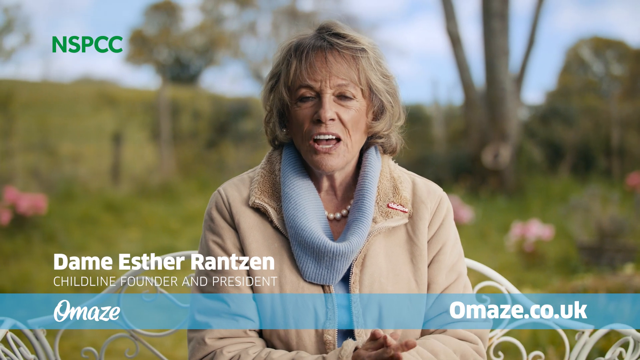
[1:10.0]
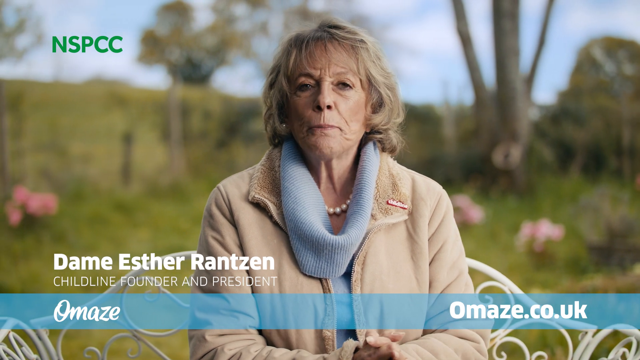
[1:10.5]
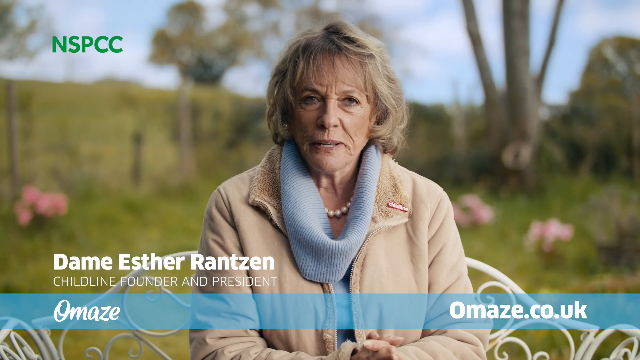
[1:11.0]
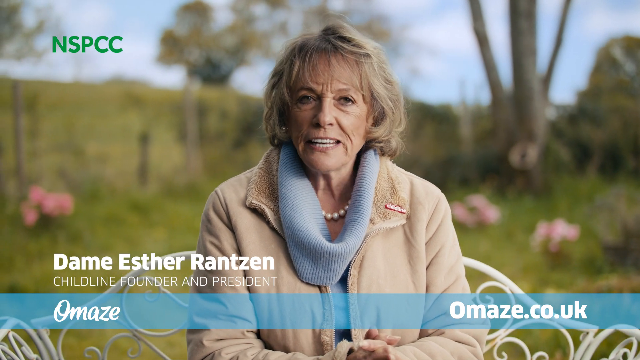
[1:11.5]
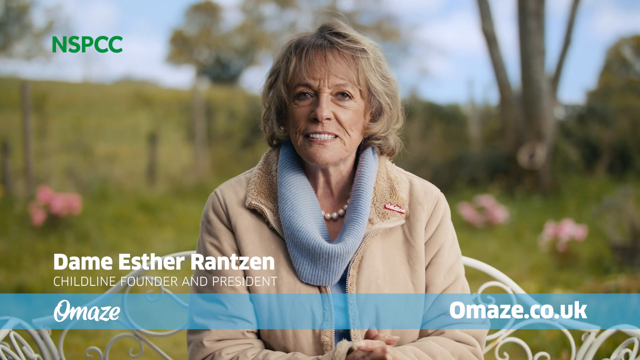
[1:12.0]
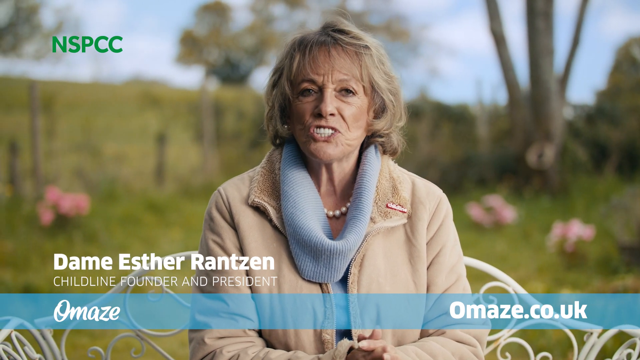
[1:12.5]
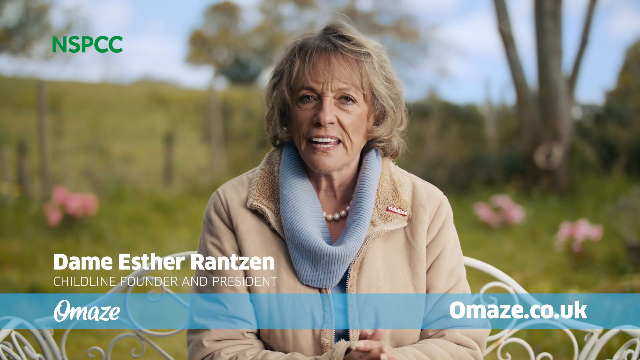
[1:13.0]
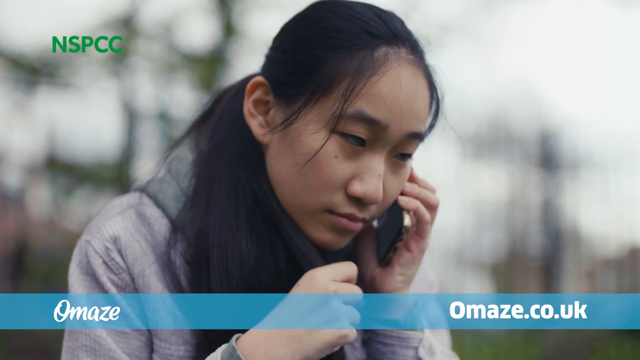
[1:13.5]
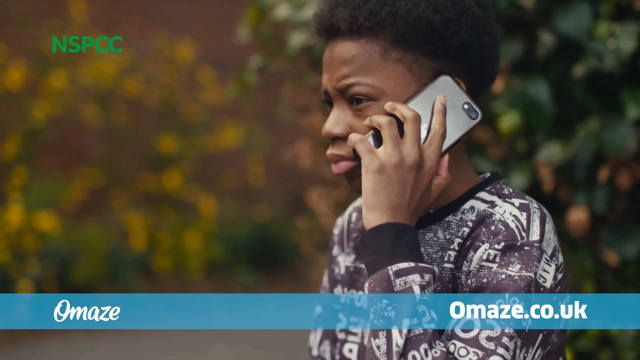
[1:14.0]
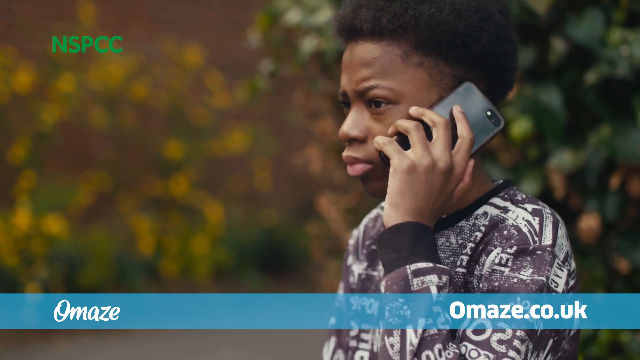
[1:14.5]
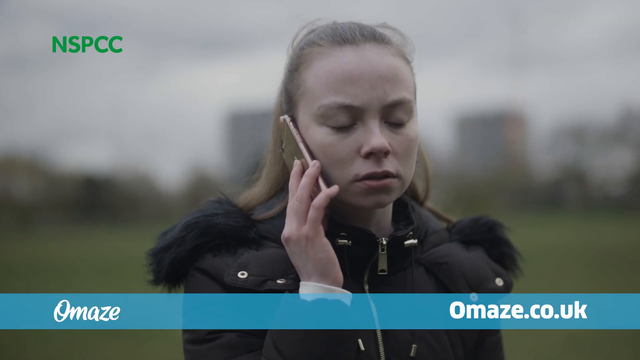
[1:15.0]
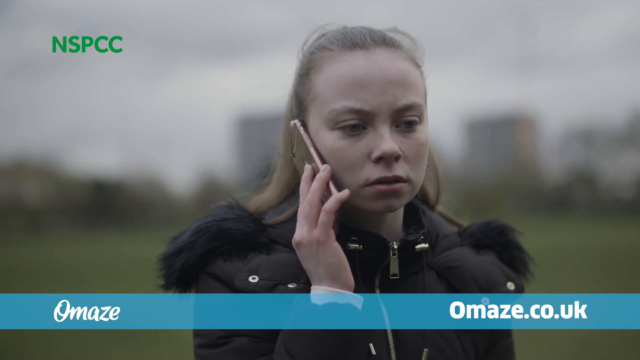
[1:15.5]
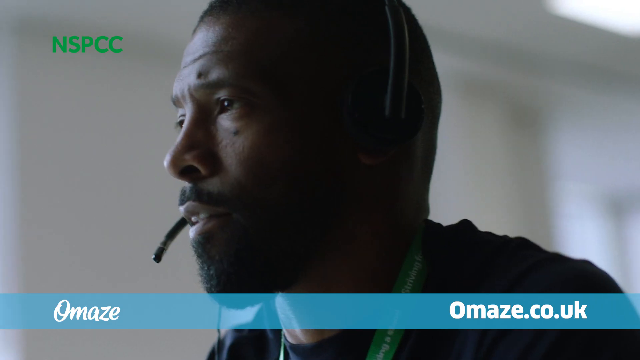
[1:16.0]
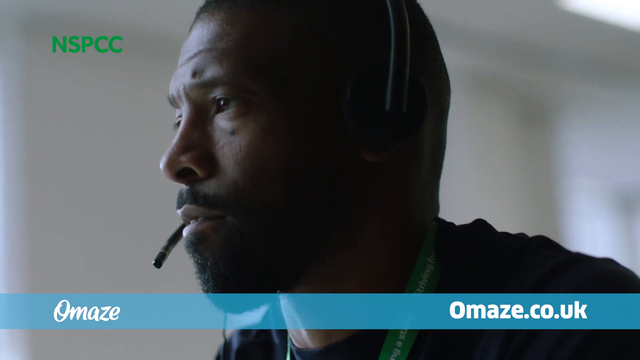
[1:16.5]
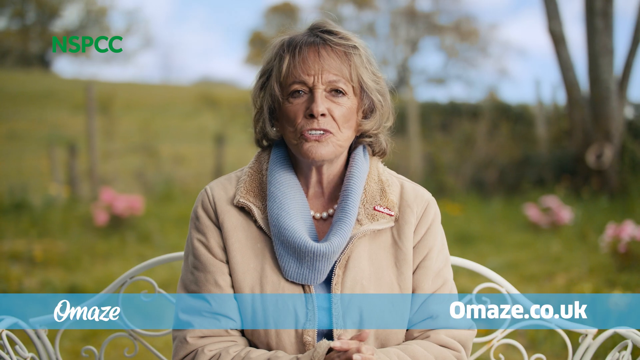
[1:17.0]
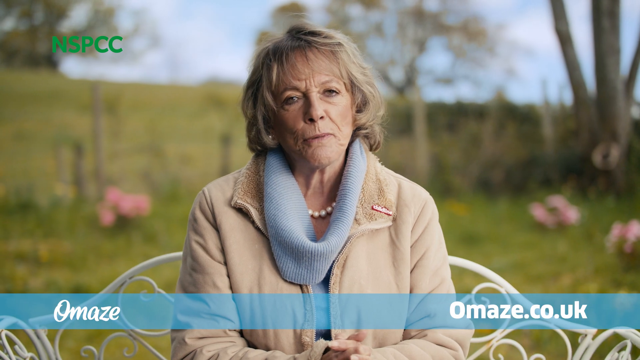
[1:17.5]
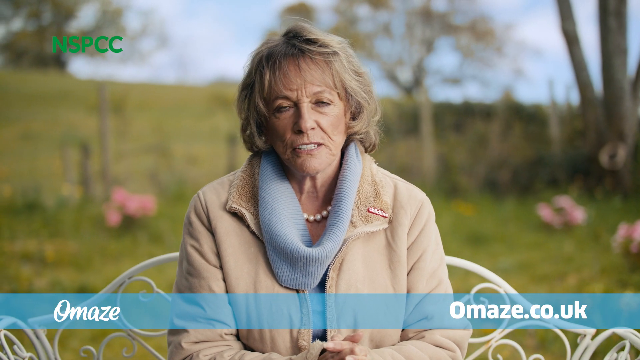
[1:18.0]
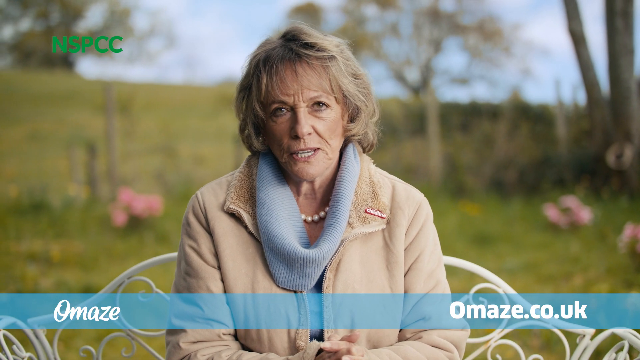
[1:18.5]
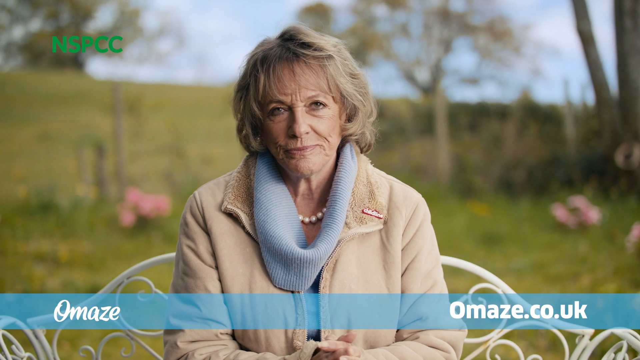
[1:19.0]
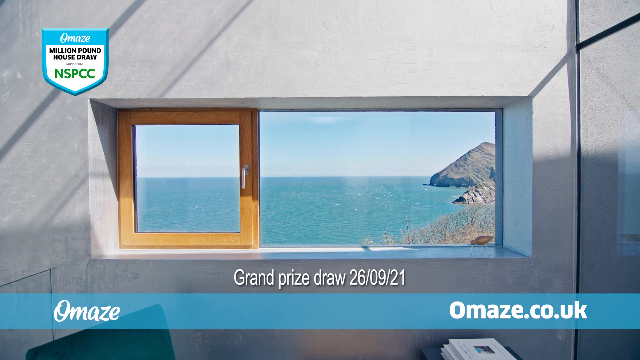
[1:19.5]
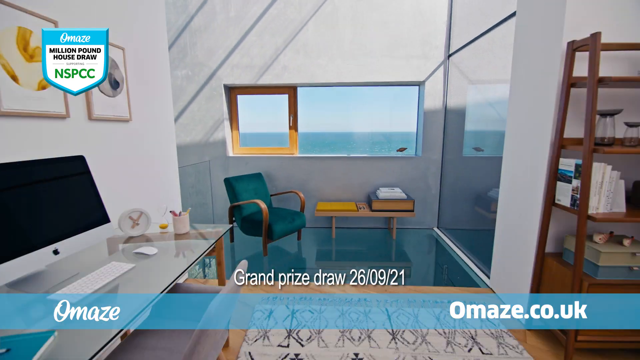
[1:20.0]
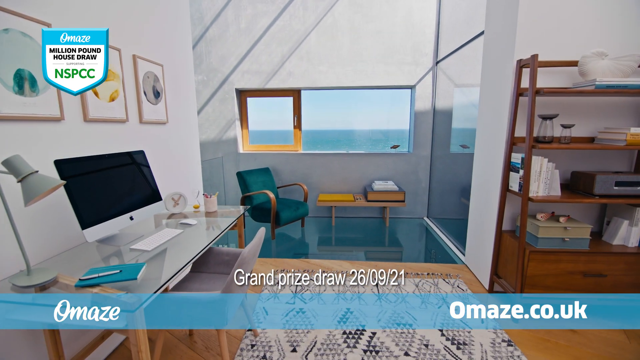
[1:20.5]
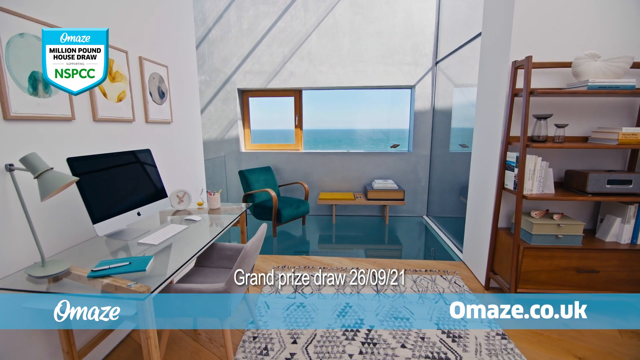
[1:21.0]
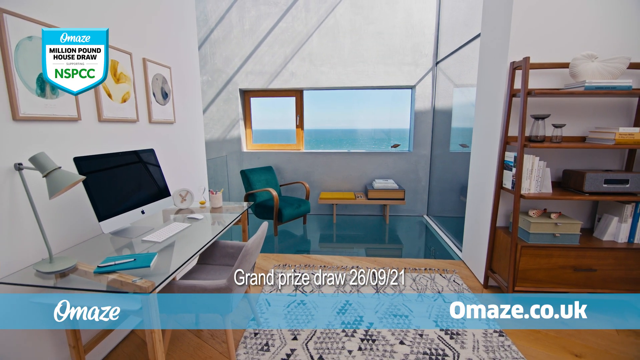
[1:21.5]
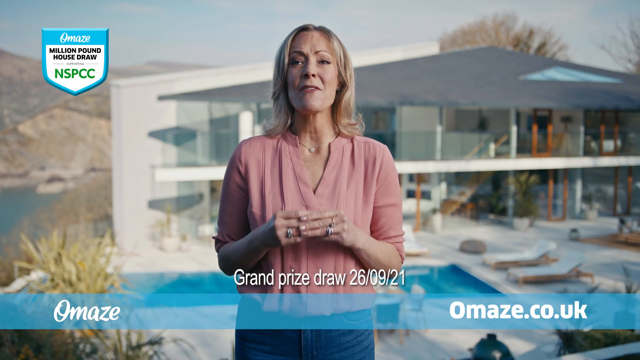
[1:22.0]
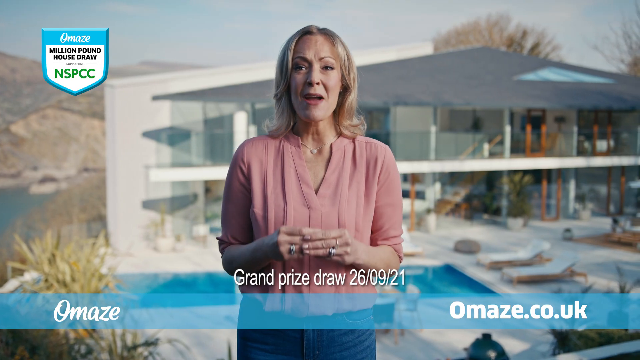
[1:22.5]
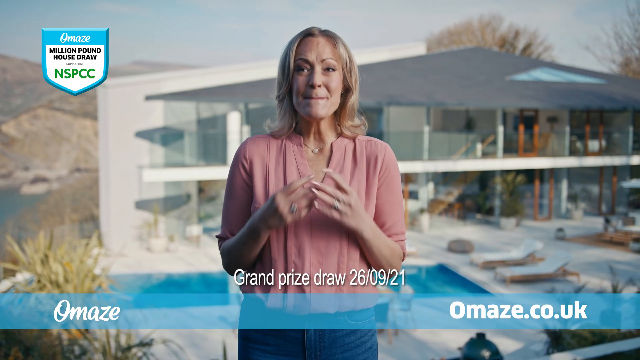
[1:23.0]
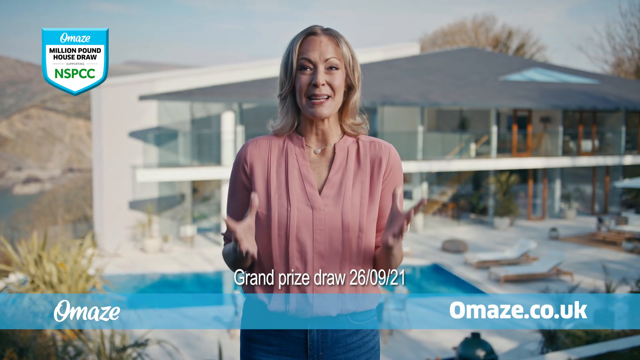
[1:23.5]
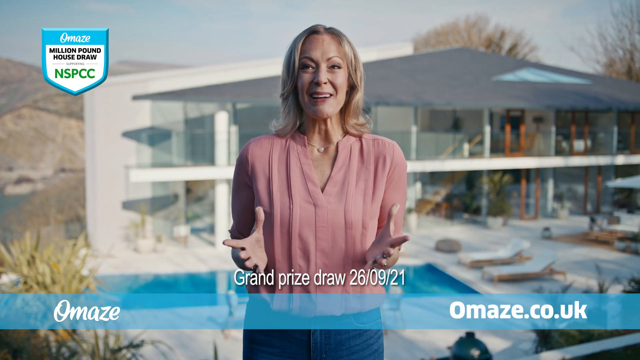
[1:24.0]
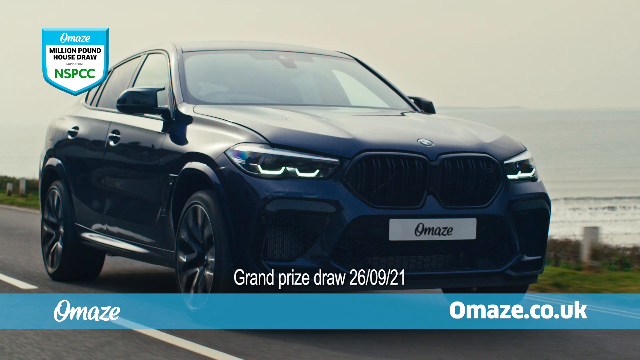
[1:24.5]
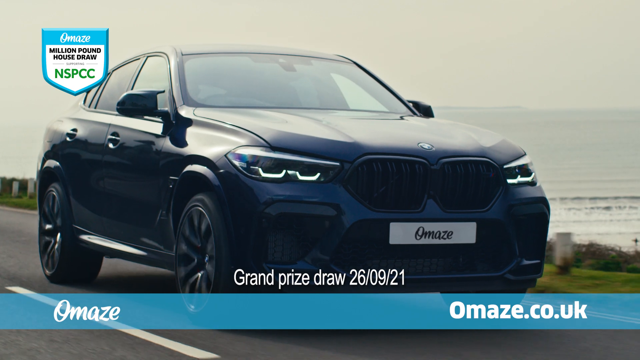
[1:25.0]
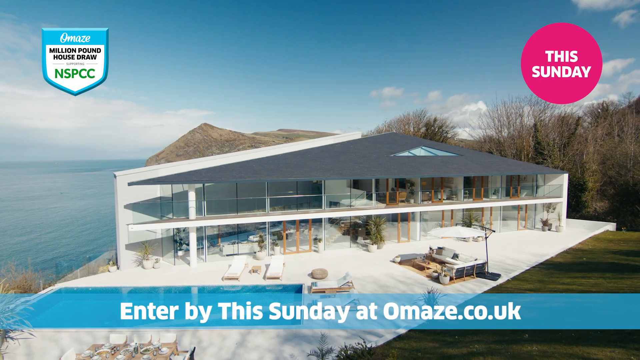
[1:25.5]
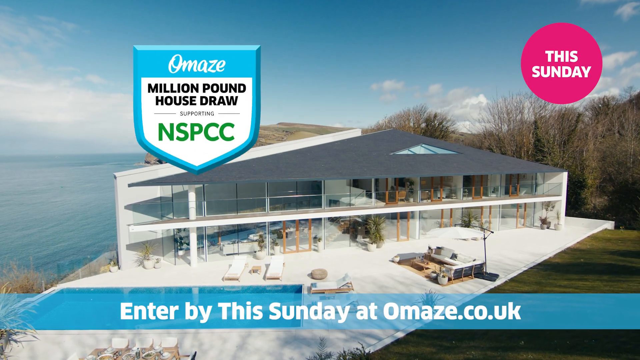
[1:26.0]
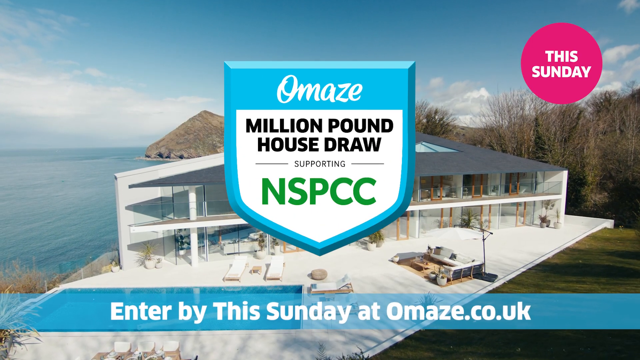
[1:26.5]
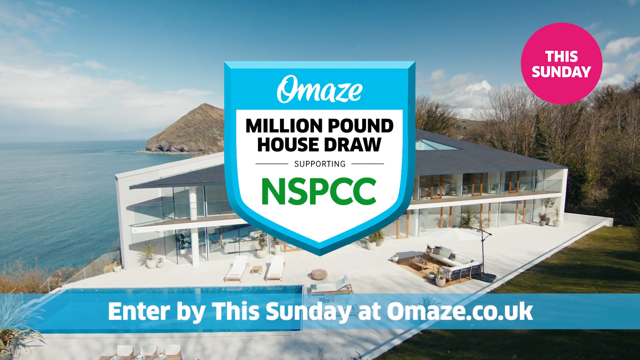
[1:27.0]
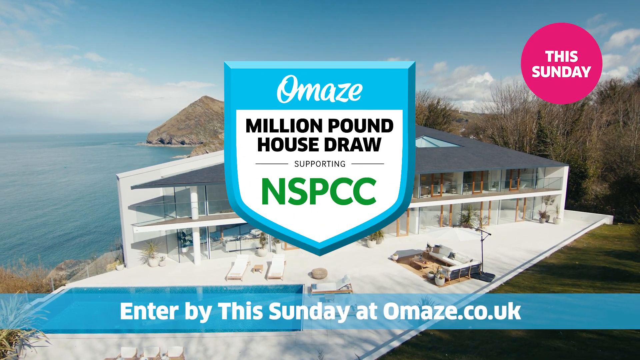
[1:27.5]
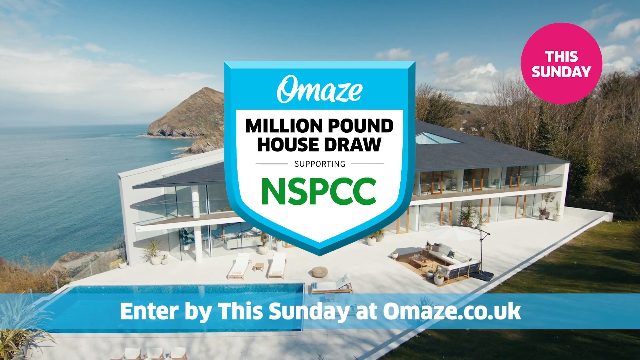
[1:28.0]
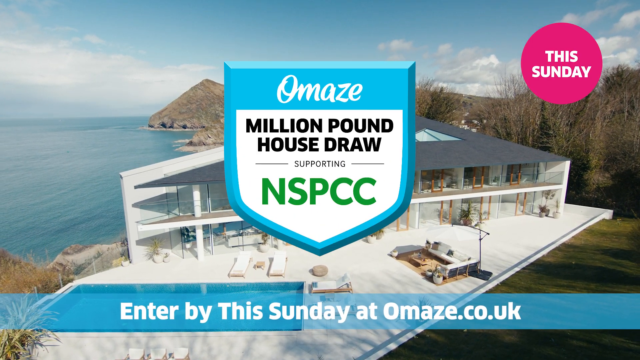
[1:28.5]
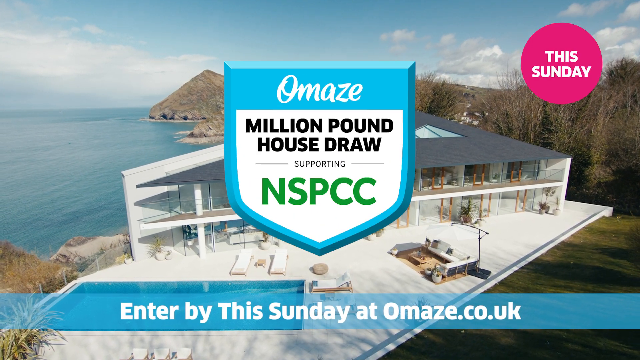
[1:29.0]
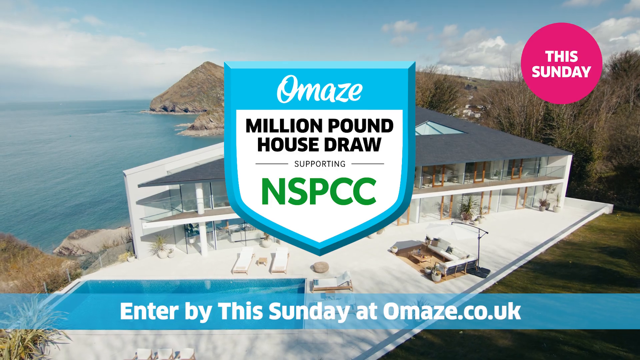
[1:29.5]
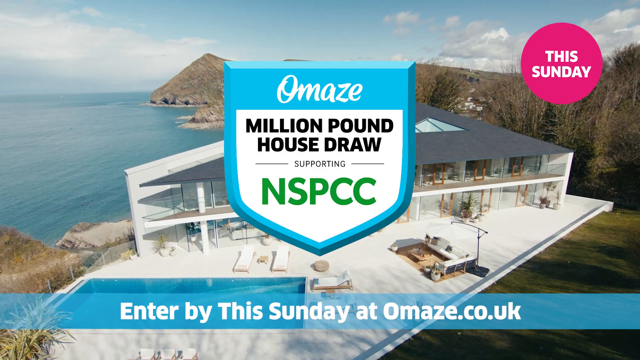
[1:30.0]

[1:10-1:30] Dame Esther Ratzin appears, an older woman who seems to be in her late 50s or early 60s. Another woman and a man are then shown briefly. Next, the woman in her early 40s, wearing a pink blouse, is also talking; she is smiling. The text reads "a million pound house draw" and "NSPCC", and further text says it is only for over 18s. The ocean is shown, as well as the interior of the resort, and a luxurious BMW car. Young people are on their phones, making or receiving calls.